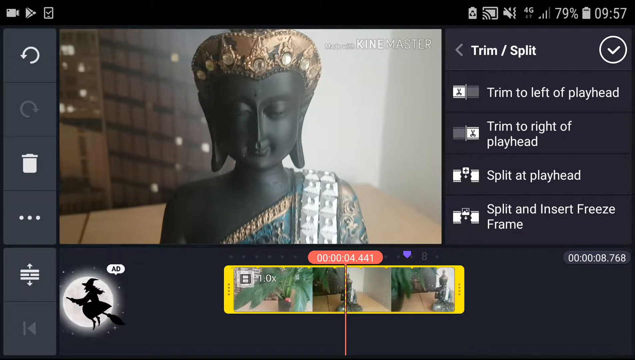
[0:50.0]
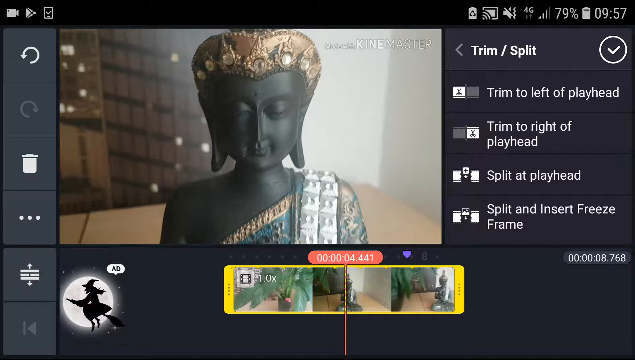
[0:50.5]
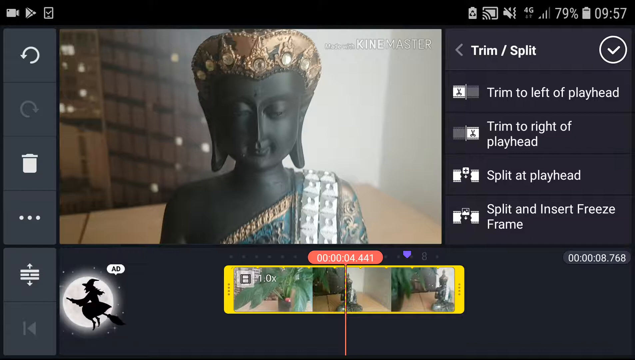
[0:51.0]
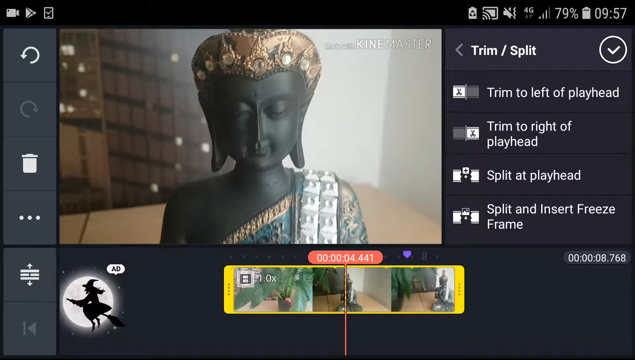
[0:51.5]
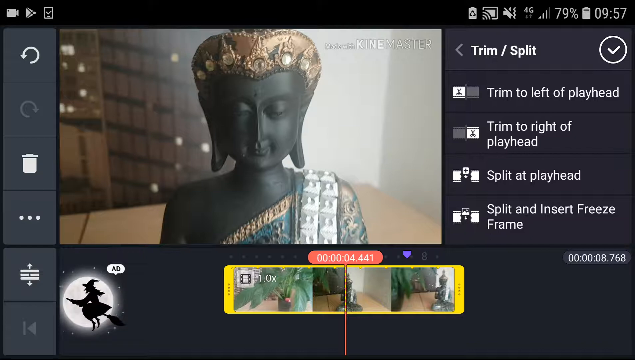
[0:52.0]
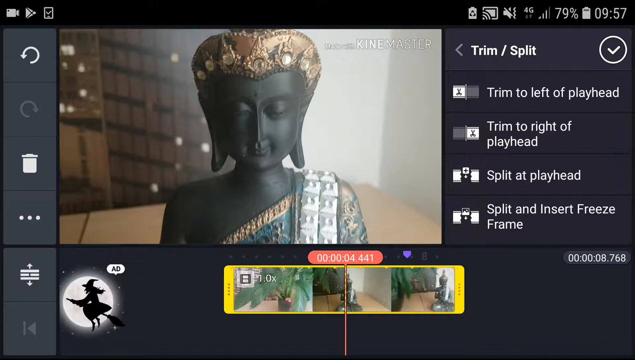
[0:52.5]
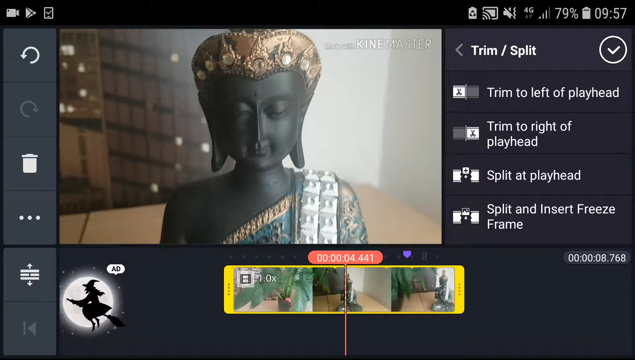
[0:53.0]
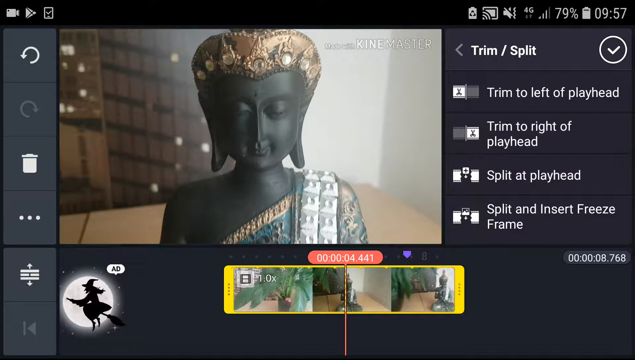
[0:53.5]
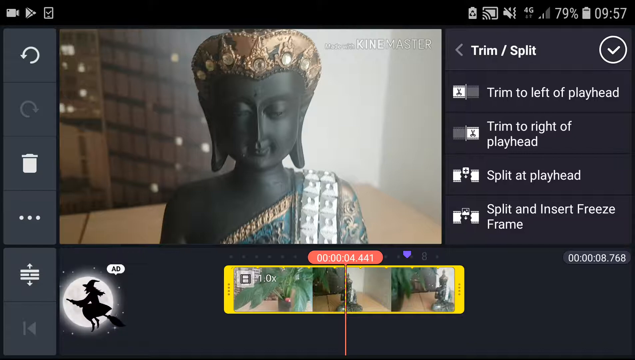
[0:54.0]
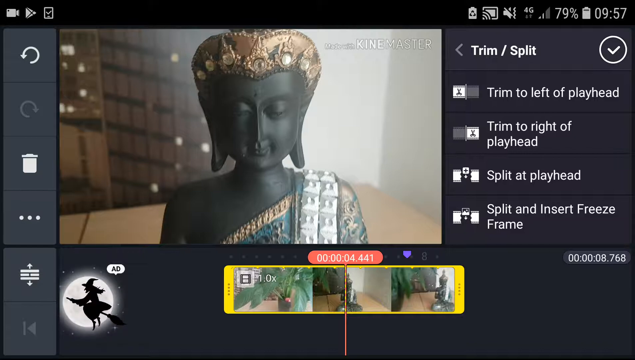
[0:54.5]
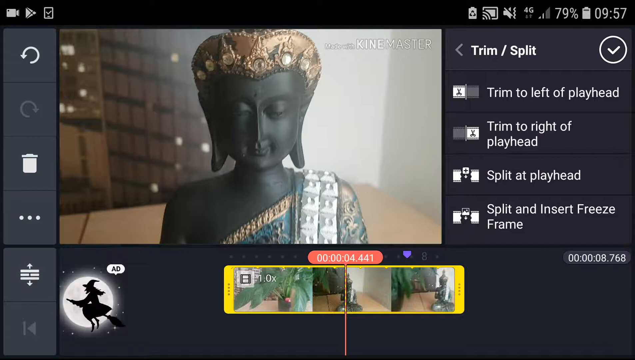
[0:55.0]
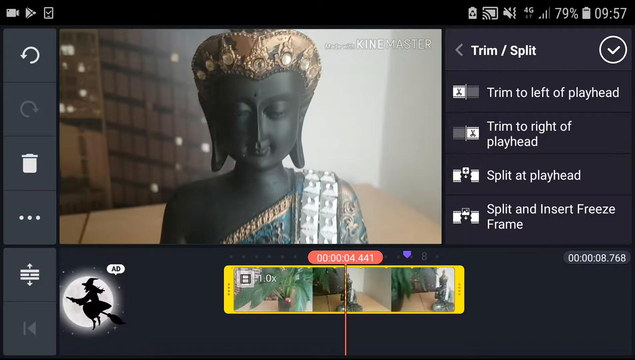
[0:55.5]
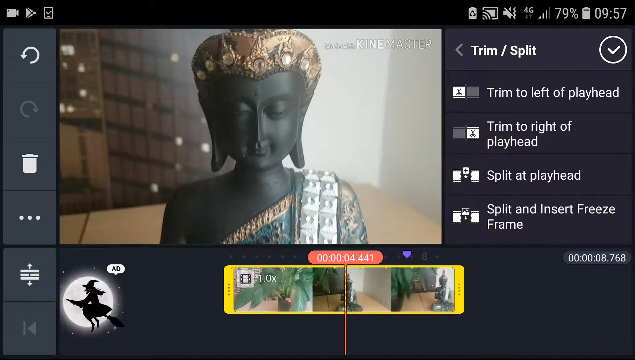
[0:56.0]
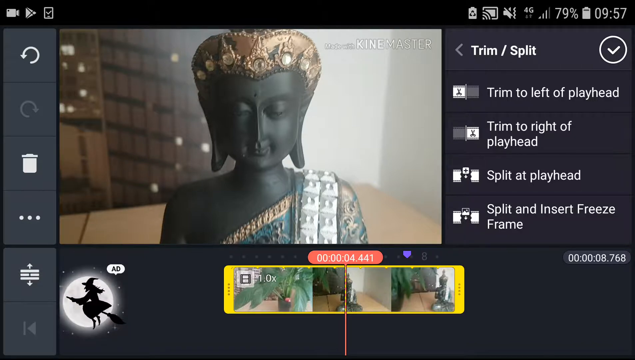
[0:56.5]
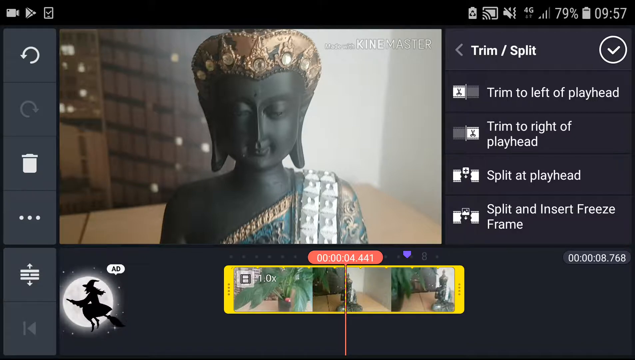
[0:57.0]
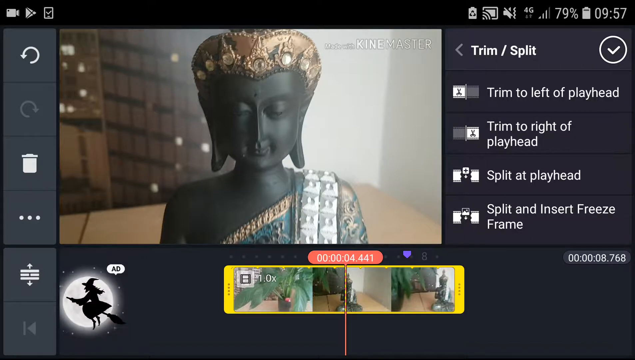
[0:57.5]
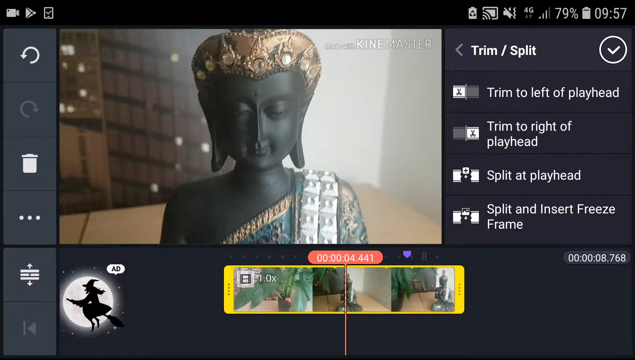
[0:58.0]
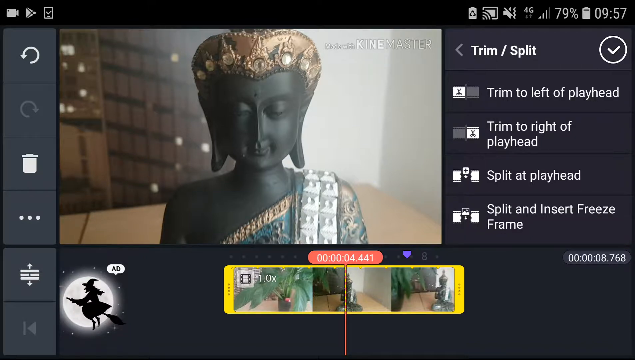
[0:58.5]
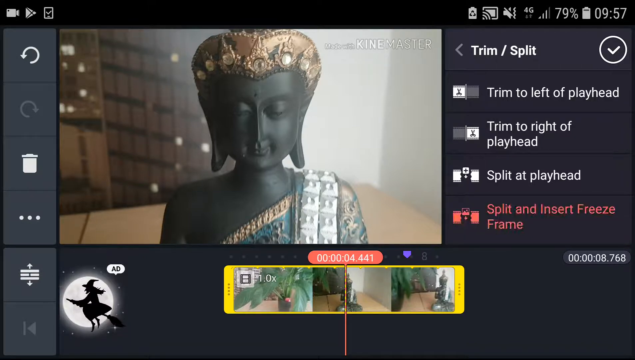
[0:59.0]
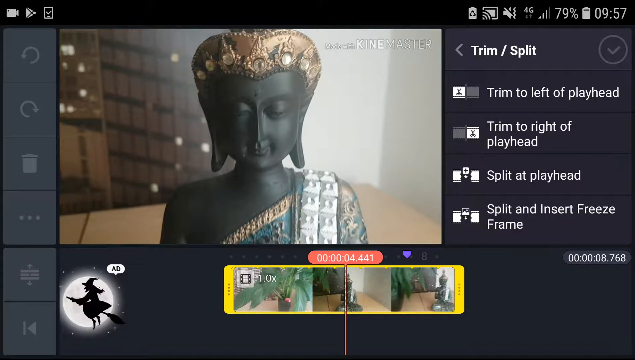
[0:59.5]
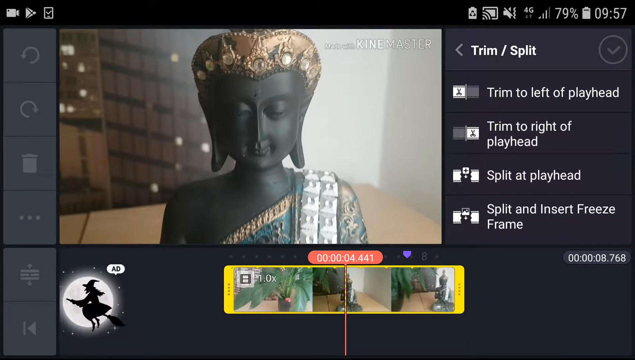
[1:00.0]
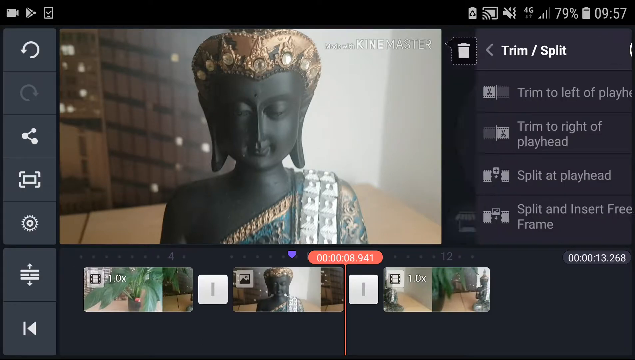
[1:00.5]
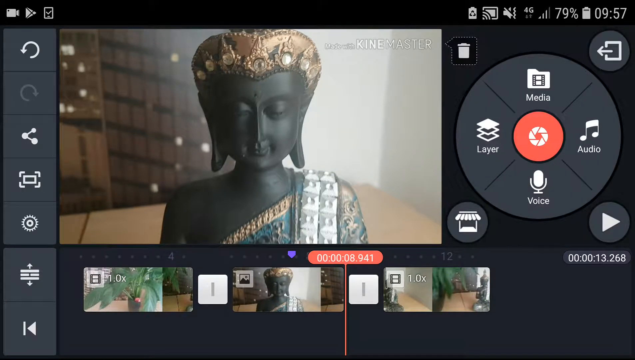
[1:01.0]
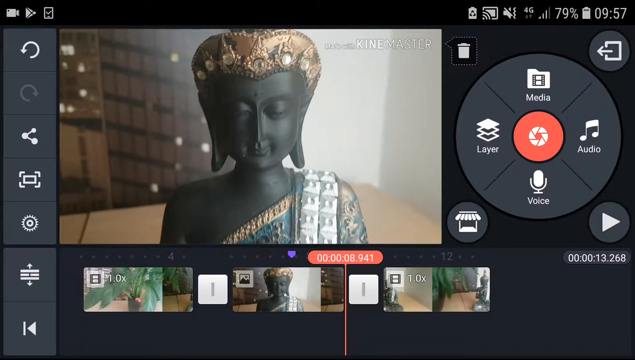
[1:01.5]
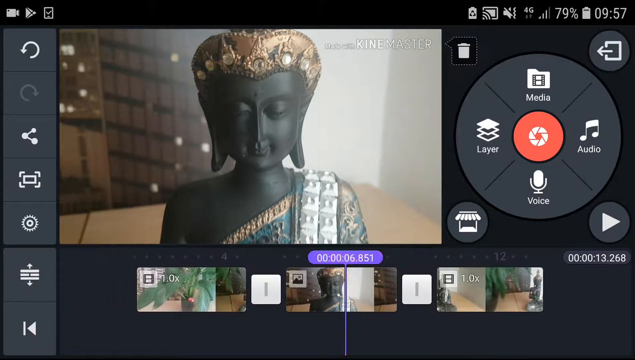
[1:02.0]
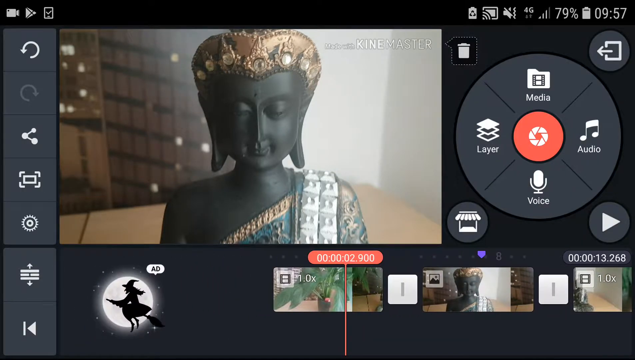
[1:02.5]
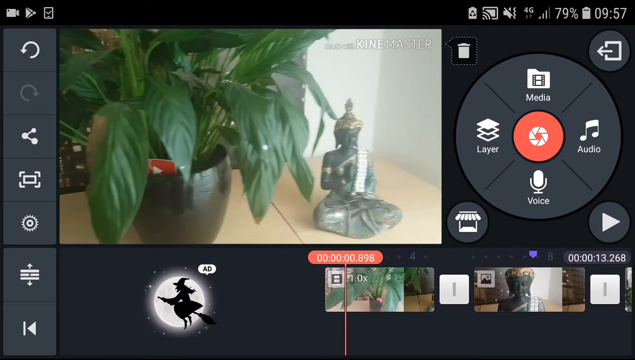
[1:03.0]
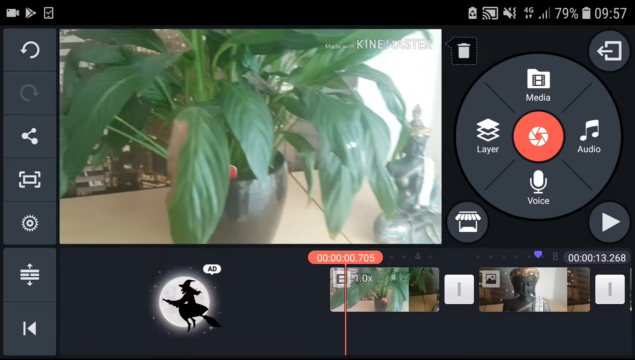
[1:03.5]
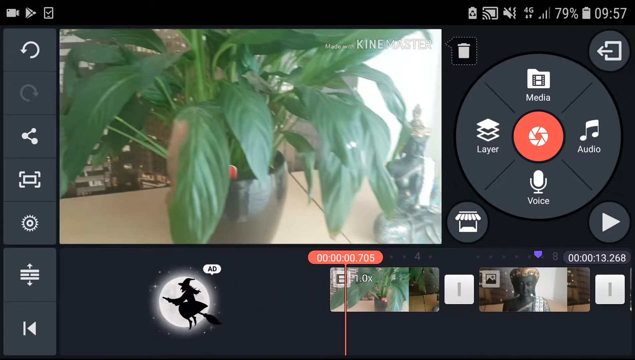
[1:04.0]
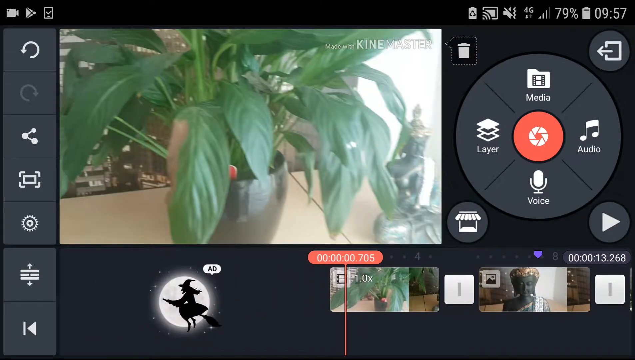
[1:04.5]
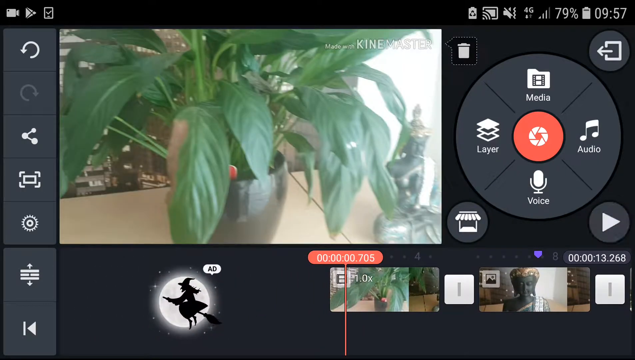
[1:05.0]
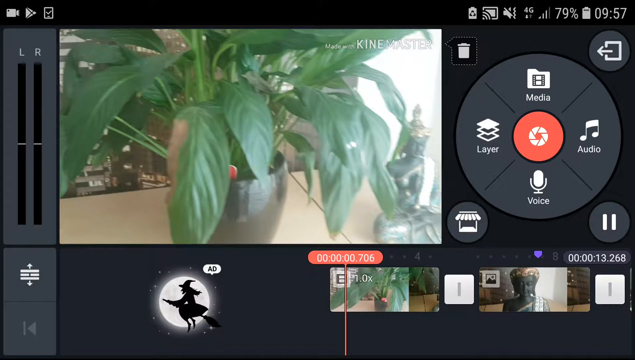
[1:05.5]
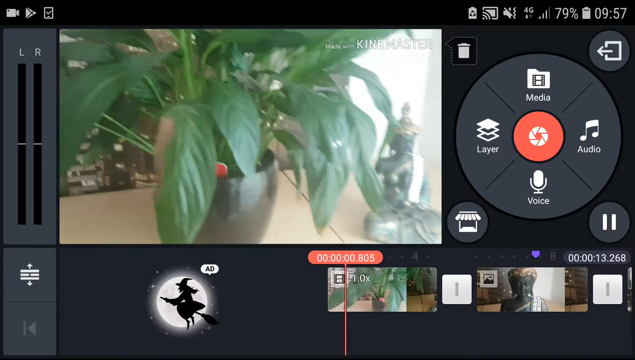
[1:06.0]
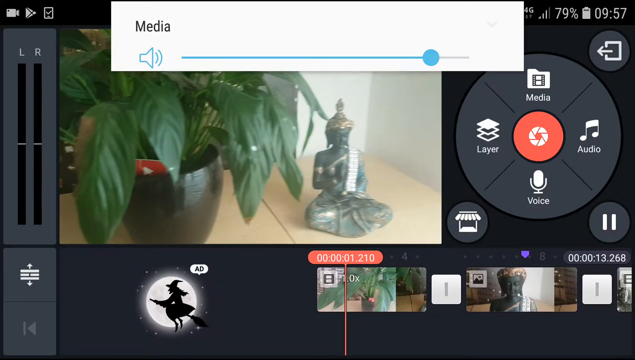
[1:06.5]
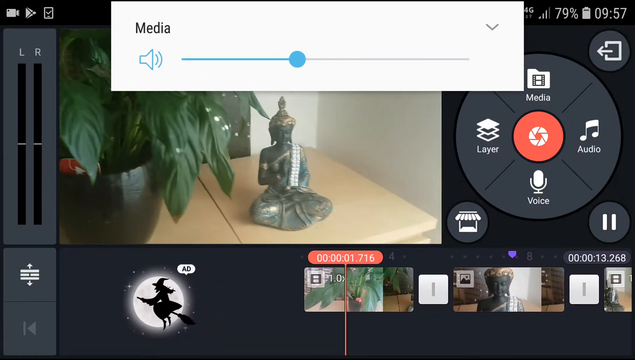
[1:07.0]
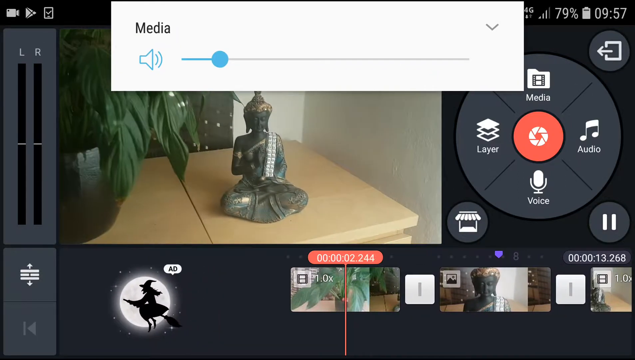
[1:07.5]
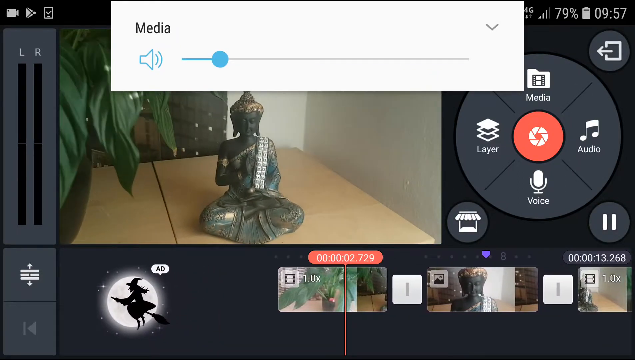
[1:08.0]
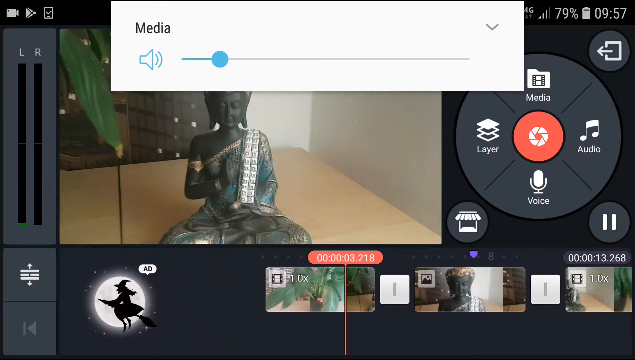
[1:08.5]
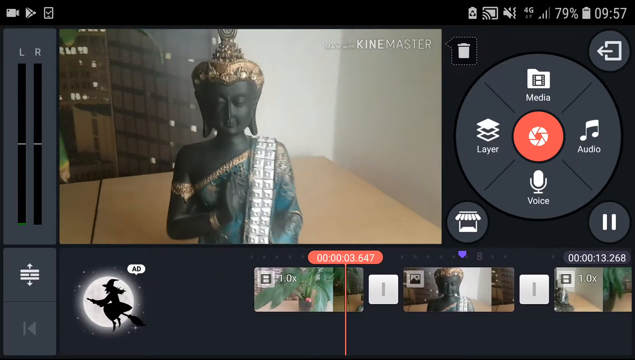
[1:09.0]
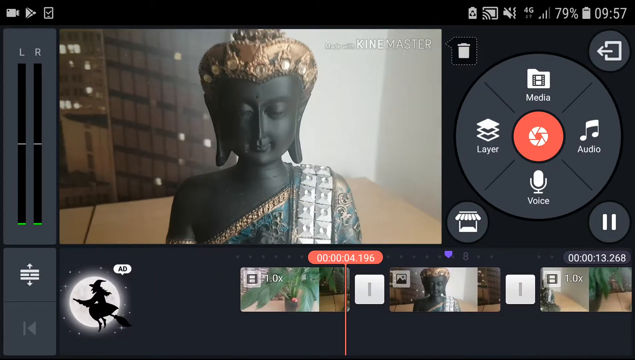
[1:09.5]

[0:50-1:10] On the left side there is still an undo button, the trash can and a setting button. At the bottom left is a little witch on a broom that says "ad". On the right are trim and split options, and under them the text reads "trim to left of playhead", "trim to right of playhead", "split at playhead" and "split and insert freeze frame". The view is still zoomed in on a little doll, and the phone still shows 79% battery at 9:57. The user pauses on it for a moment, then clicks split and insert freeze frame. They go back to the beginning, turn the volume down, and zoom back in on the doll.